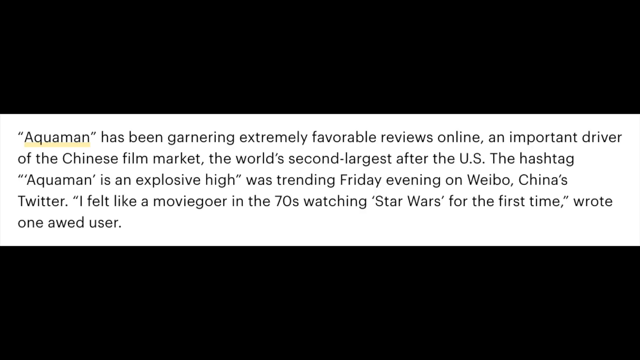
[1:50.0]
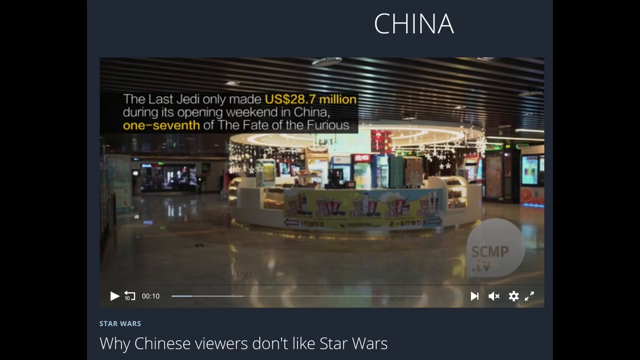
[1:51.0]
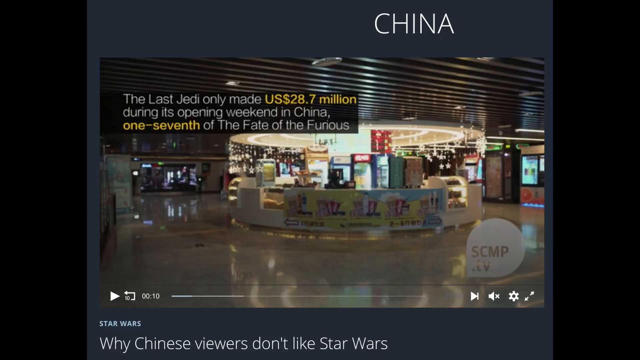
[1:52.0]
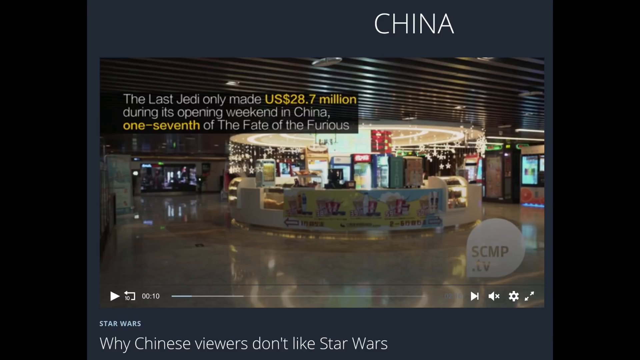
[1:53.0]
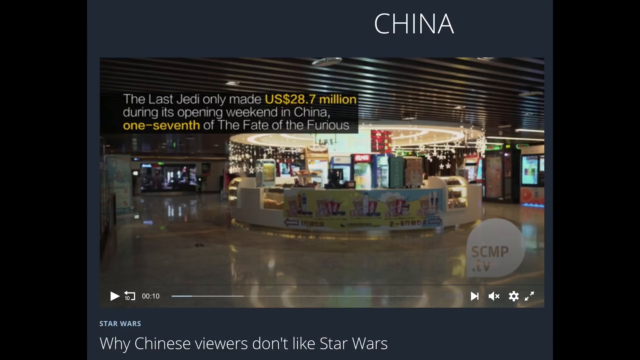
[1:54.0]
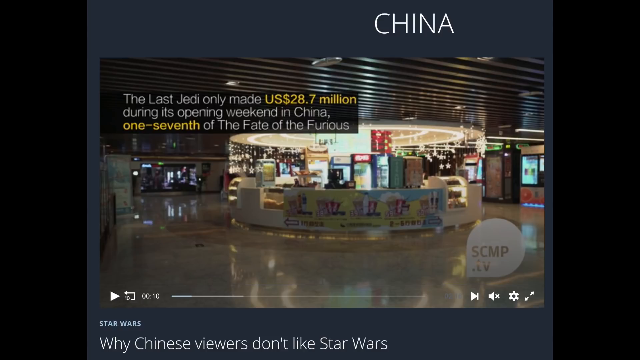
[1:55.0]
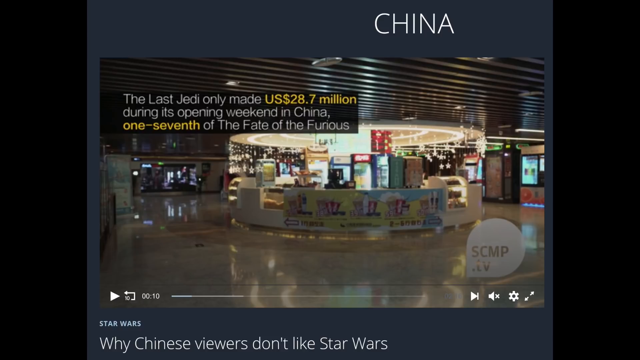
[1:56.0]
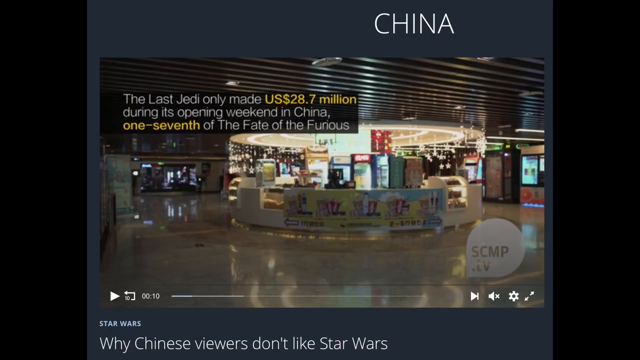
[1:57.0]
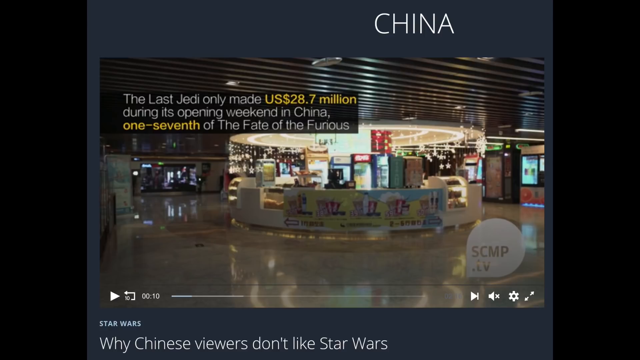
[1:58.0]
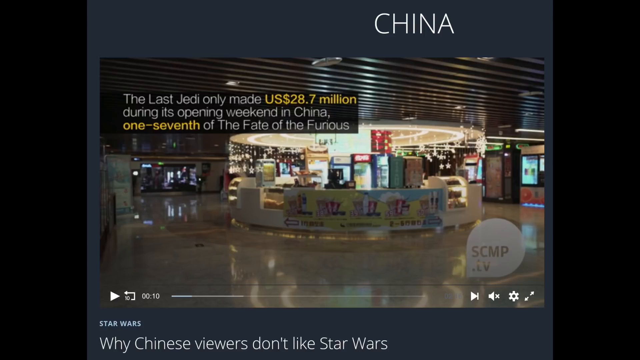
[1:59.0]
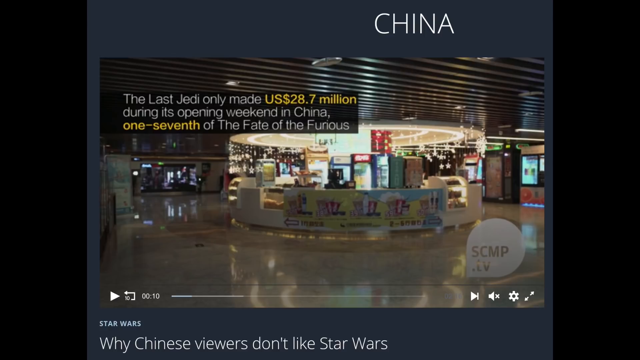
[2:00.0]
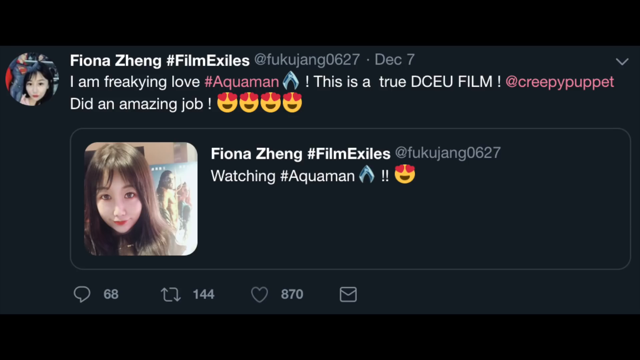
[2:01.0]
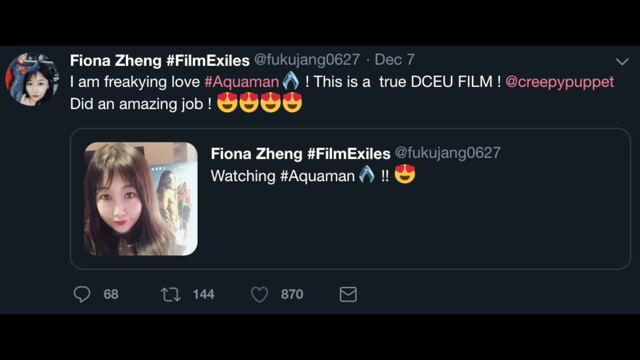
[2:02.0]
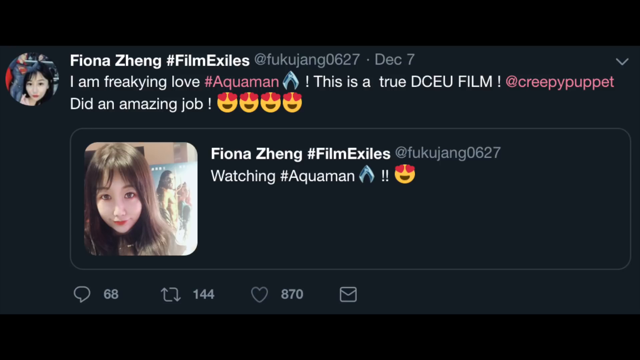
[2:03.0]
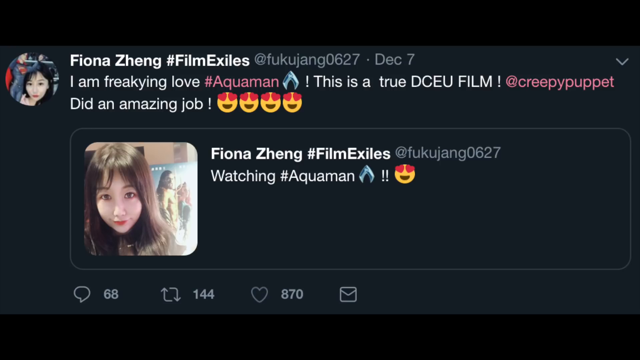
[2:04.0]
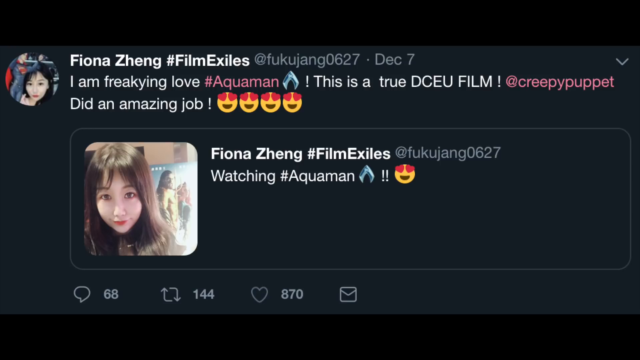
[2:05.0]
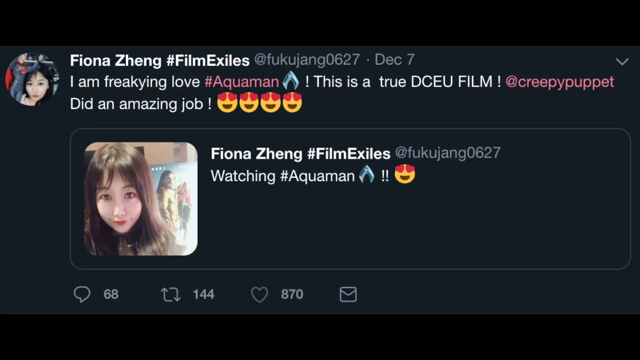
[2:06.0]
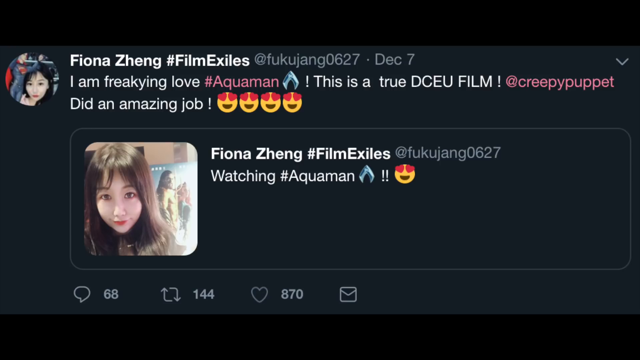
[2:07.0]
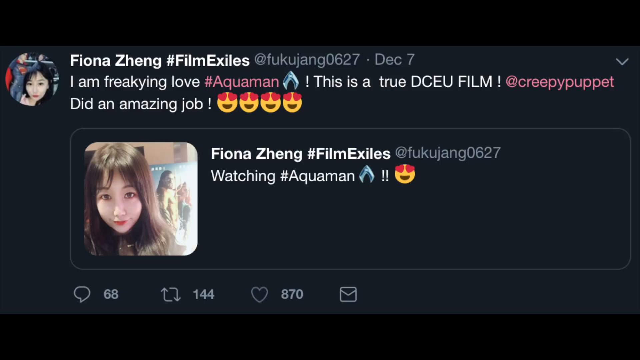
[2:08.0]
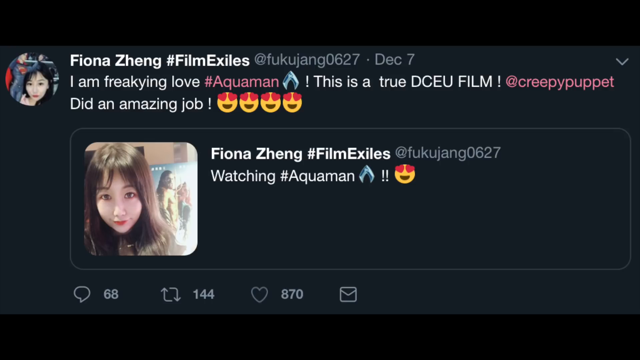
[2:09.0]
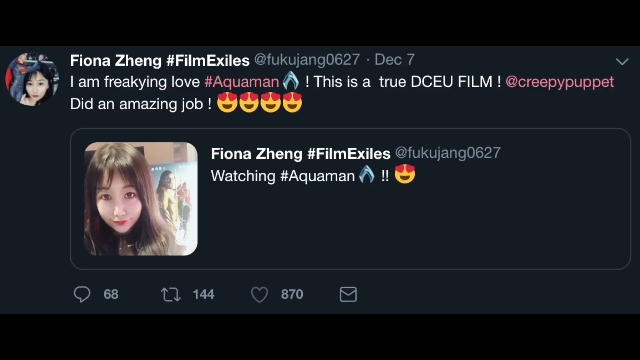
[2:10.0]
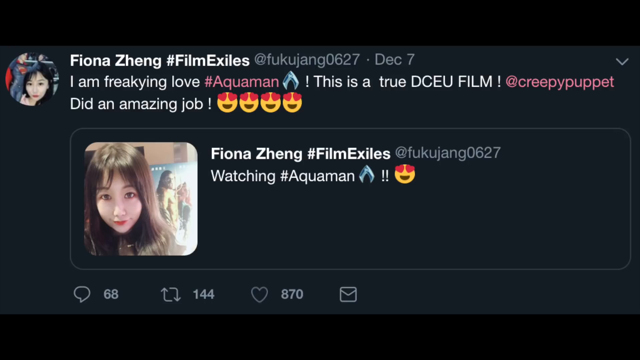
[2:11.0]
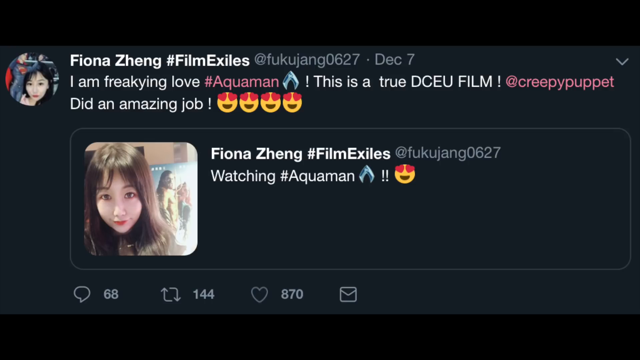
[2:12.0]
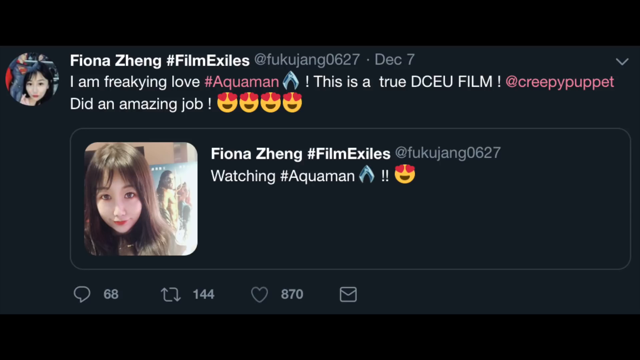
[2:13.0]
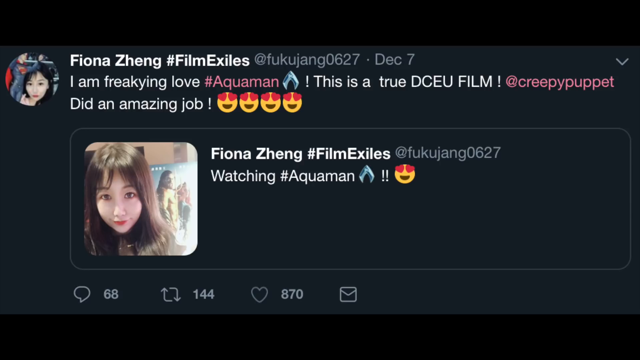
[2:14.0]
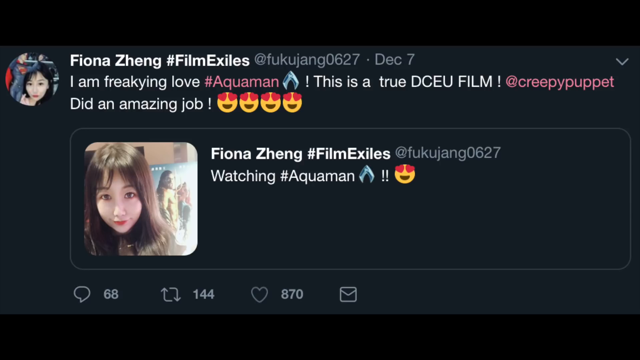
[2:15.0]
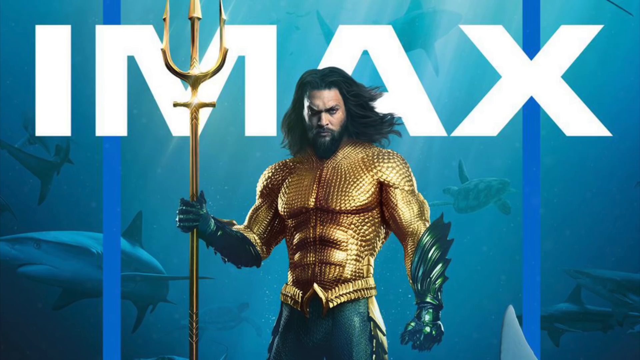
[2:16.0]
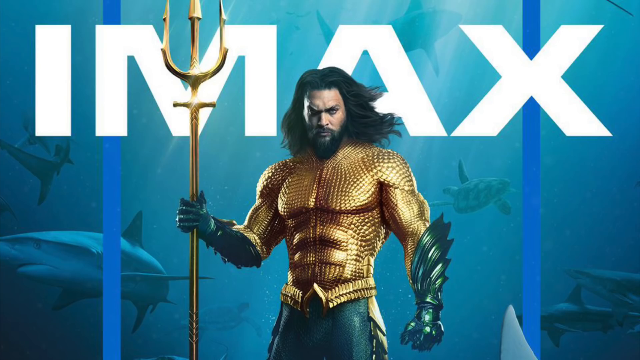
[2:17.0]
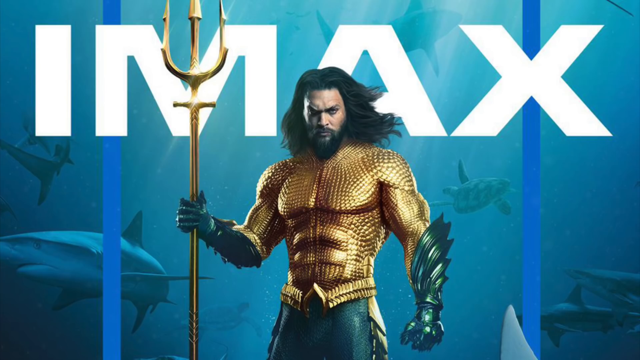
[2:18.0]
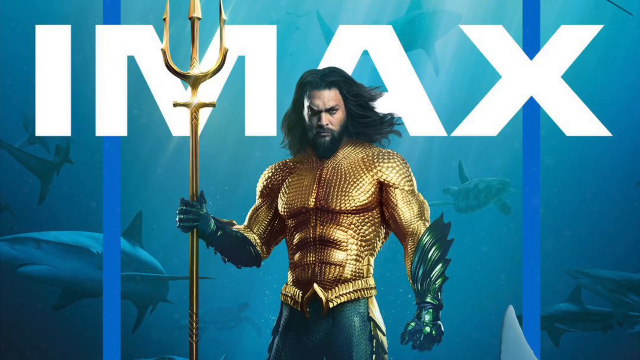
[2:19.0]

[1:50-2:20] Black text on a white background reads "Aquaman has been garnering extremely favorable reviews online, an important driver of the Chinese film market. The world's second largest after the U.S." and notes that "#Aquaman is an explosive high" was trending Friday evening on Weibo, China's Twitter, along with a user's comment about feeling like a moviegoer in the 70s watching Star Wars for the first time. The video then changes to a picture of a China theater with text stating "The Last Jedi only made about $28.7 million U.S. during its opening weekend in China, one-seventh of The Fate of the Furious," and further text mentioning Star Wars. Next comes a social media post saying "I am freaking love Aquaman. This is true DCEU film. Did an amazing job.", and another post from the same user saying "watching Aquaman." Finally, a picture shows Jason Momoa standing in front of the word IMAX on an Aquaman poster.